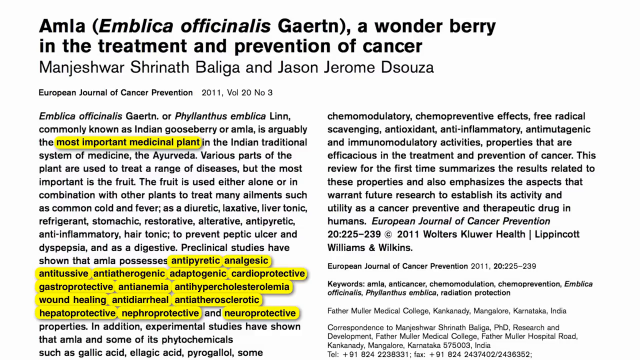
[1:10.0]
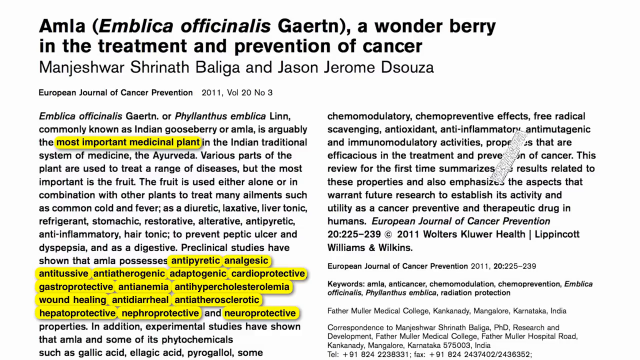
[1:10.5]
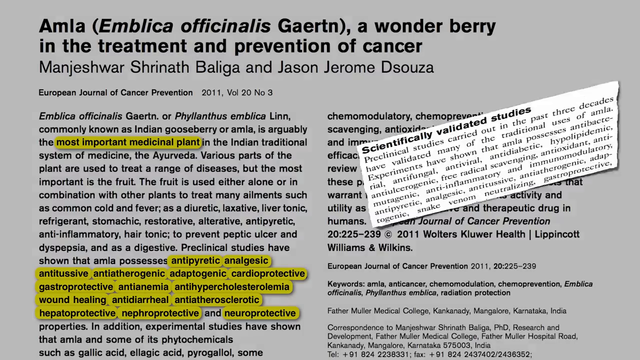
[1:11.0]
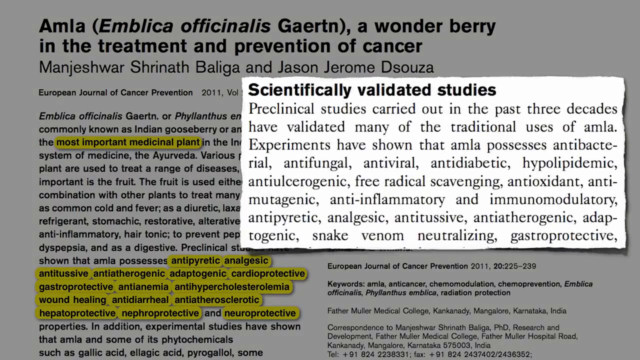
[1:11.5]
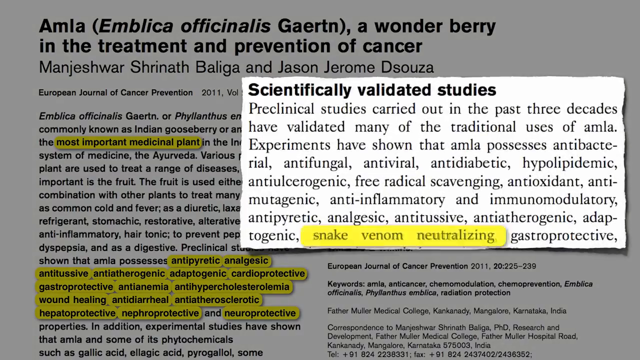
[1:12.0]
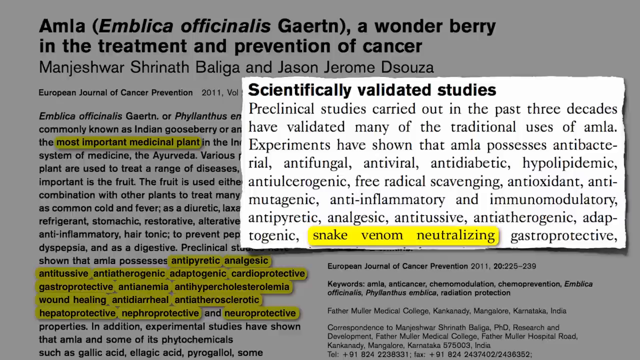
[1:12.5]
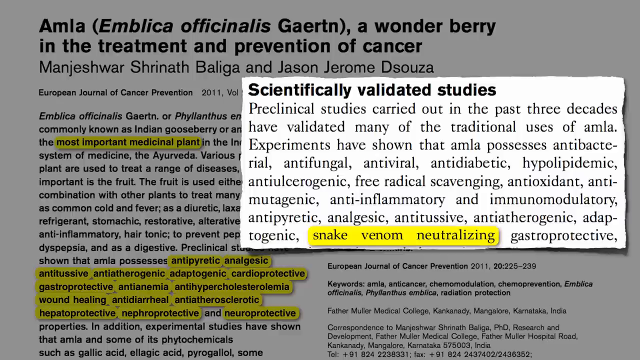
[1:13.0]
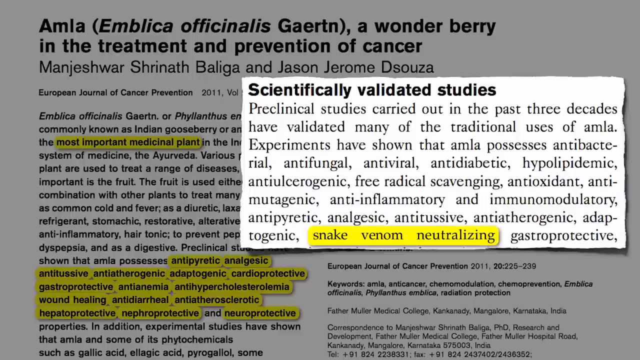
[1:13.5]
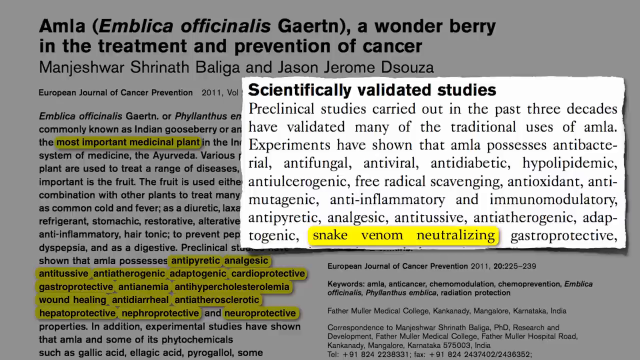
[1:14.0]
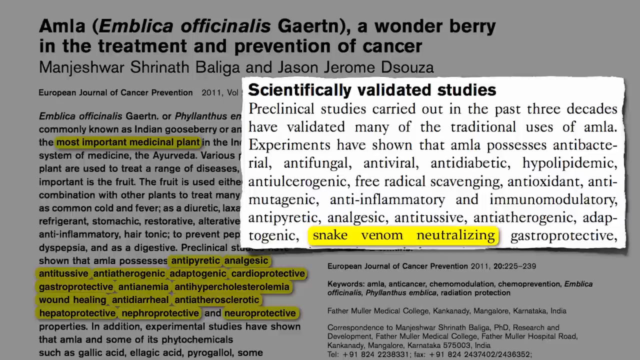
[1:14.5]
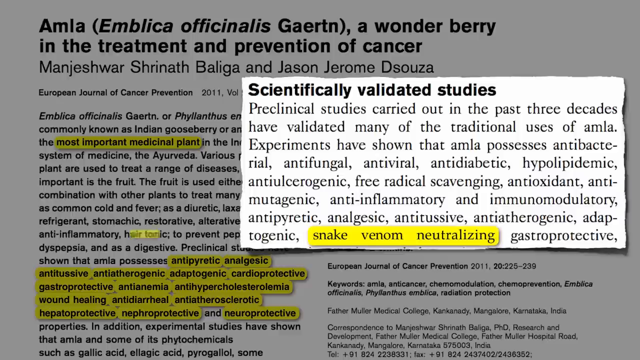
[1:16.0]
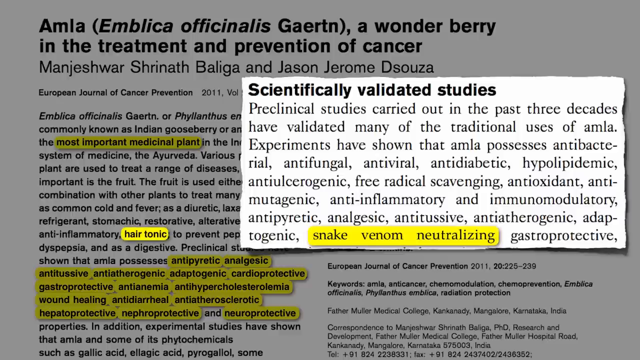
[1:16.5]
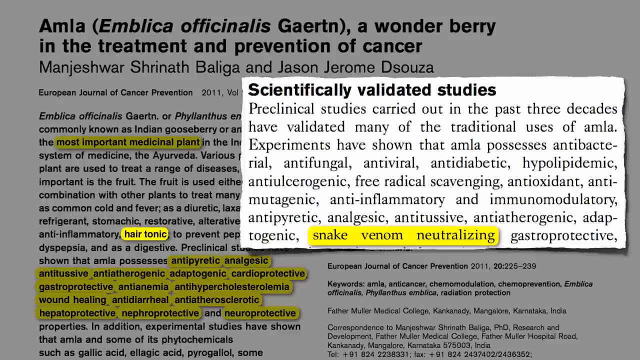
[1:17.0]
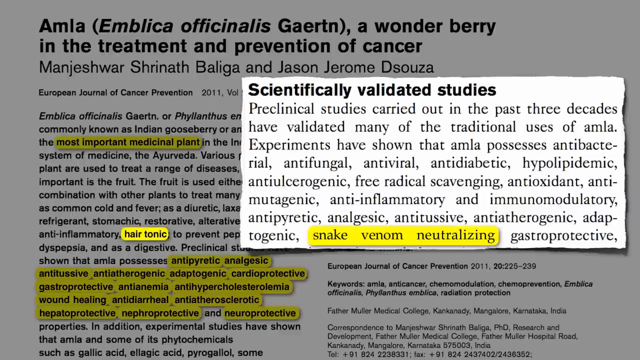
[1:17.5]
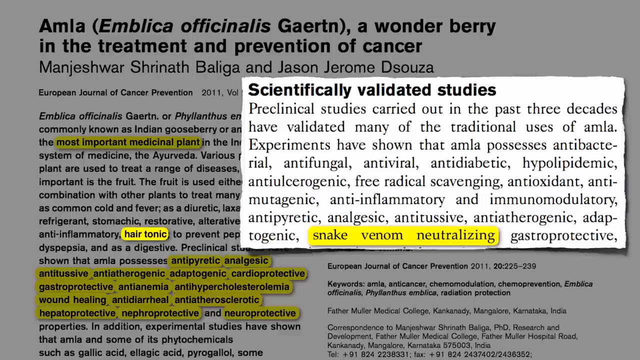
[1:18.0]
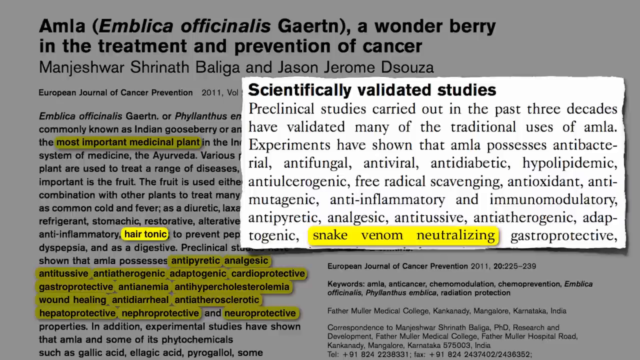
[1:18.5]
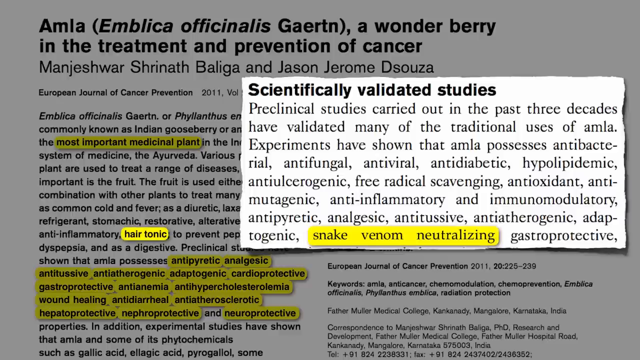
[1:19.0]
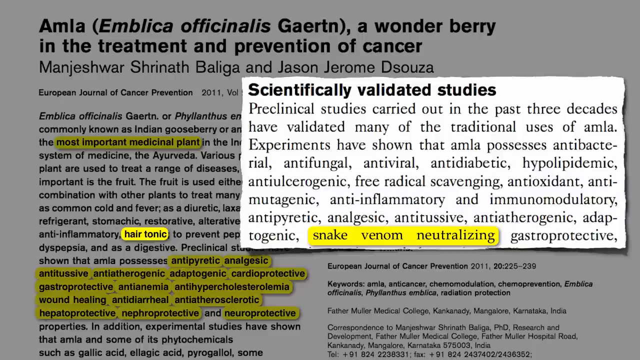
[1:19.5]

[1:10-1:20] What looks like an article shows two columns of text, with some text in the left column highlighted in yellow. Over the right column is a box whose edges kind of look like subtly ripped paper. It has a bold heading at the top reading "scientifically validated studies" and a paragraph of text detailing three clinical studies that were carried out; toward the bottom of the paragraph, the text "snake venom neutralizing" is highlighted in yellow. Then, in a paragraph in the left column, the words "hair tonic" are highlighted in yellow.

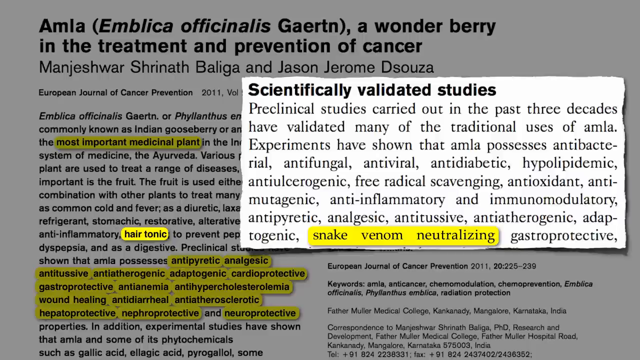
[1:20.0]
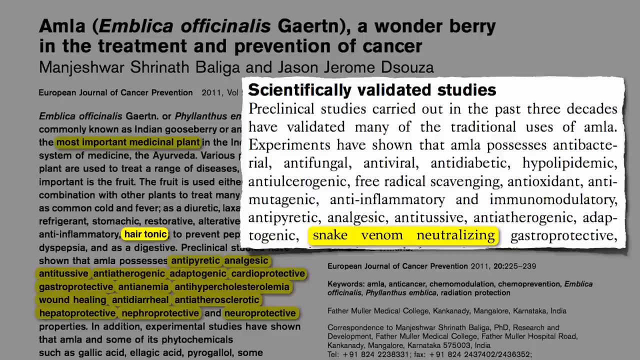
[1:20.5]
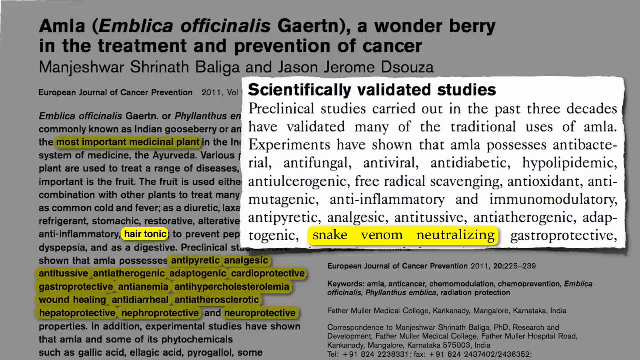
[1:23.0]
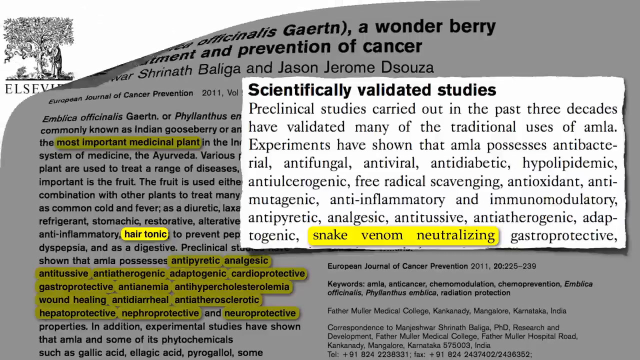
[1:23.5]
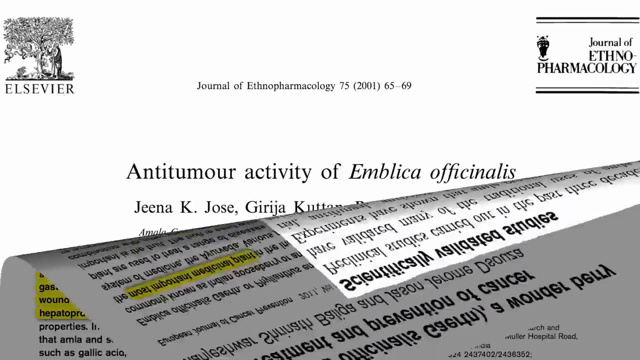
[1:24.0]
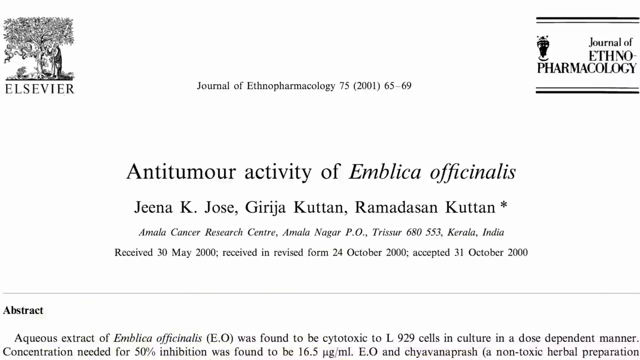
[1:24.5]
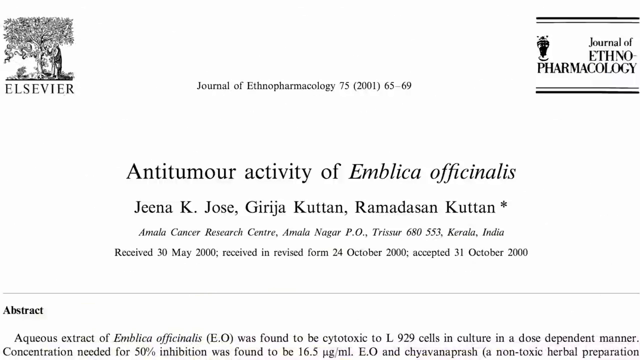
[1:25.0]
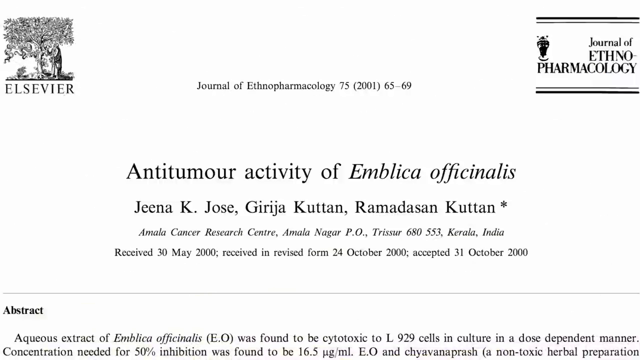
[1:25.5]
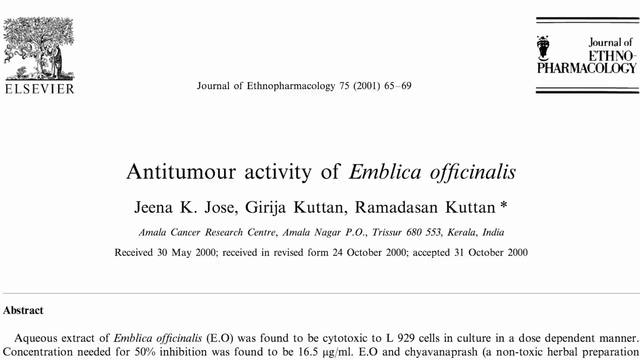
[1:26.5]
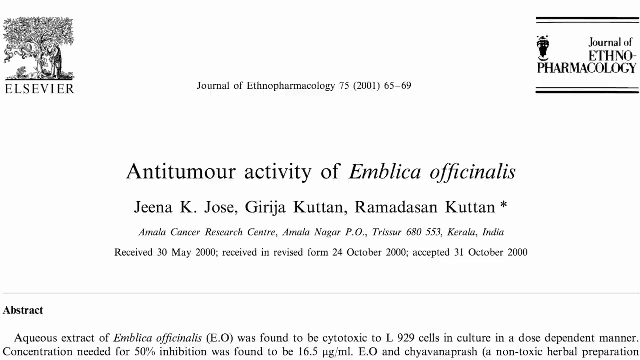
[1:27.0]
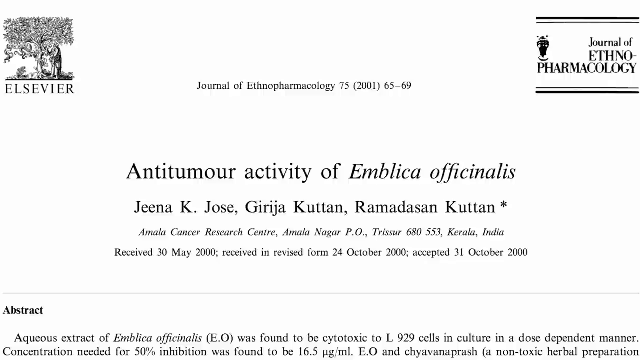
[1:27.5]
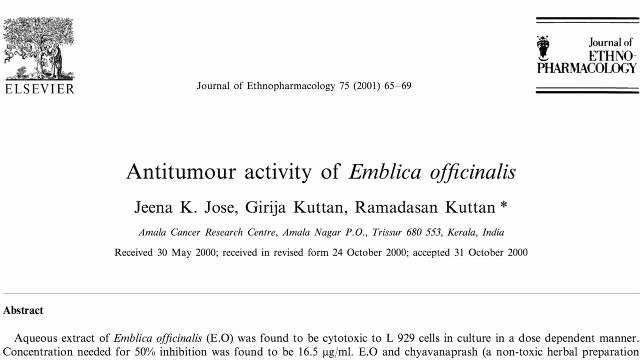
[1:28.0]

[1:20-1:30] An article has some text highlighted in yellow in the left column. On the right, a rectangular white box that kind of looks like a torn piece of paper pops up, with a bold heading at the top reading "Scientifically Validated Studies" and a paragraph of black text beneath it, at the bottom of which the words "Snake Venom Neutralizing" are highlighted in yellow. In a transition, the document kind of folds downward, and the next screen seems to be another article. At the top, small letters read "Journal of Ethnopharmacology 75 (2001) 65-69". On the left is a logo that kind of looks like a tree with an animal next to it, maybe a bear standing up, with "ElSEVIER" underneath. In the far right corner is another logo that looks like a robot man. Small text reads "Journal of" and larger text reads "Ethnopharmacology". The paper's title is "Antitumor Activity of Emblica Officinalis", followed by the authors' names, their locations, and the dates it was posted, revised and accepted. Beneath that, a small separator line sits above the article's abstract.